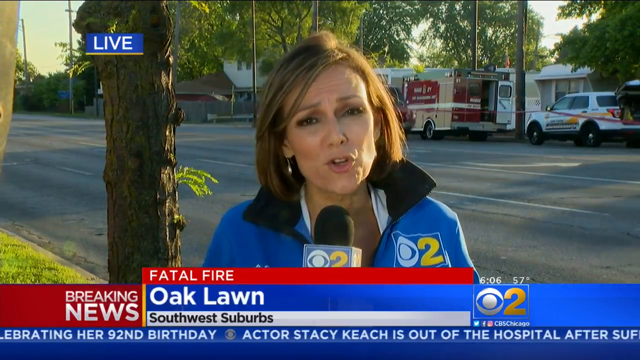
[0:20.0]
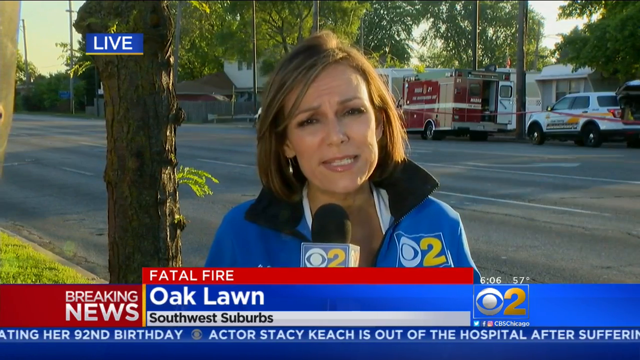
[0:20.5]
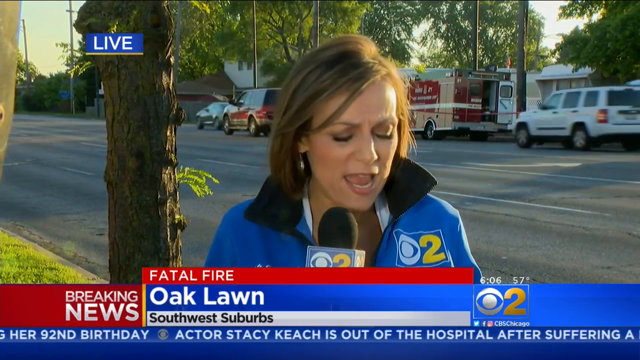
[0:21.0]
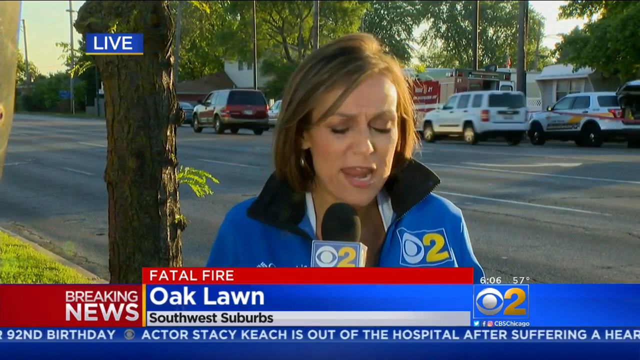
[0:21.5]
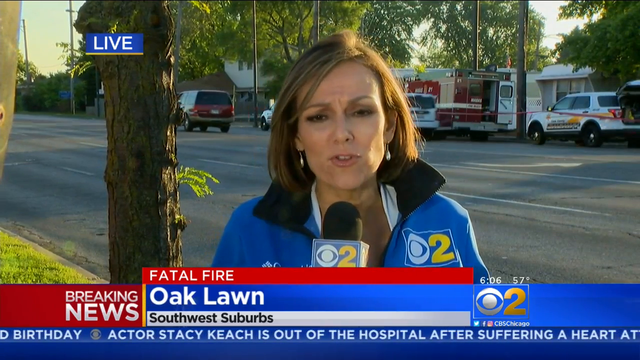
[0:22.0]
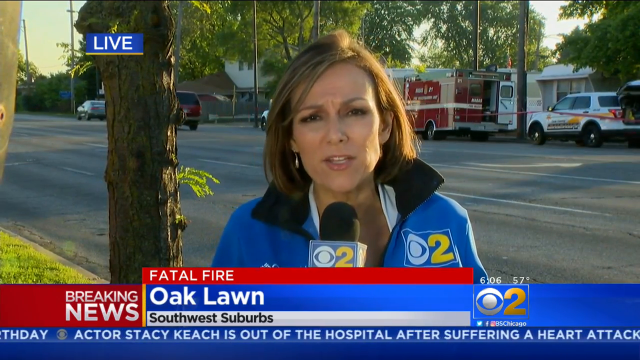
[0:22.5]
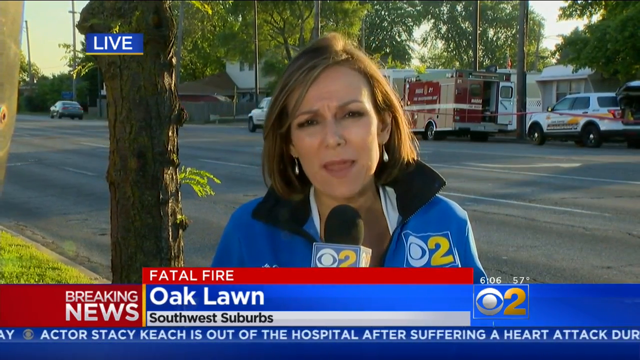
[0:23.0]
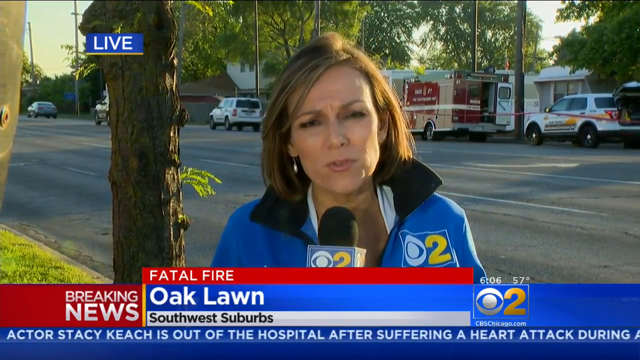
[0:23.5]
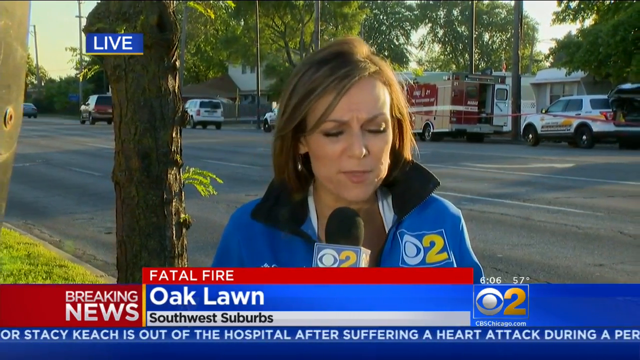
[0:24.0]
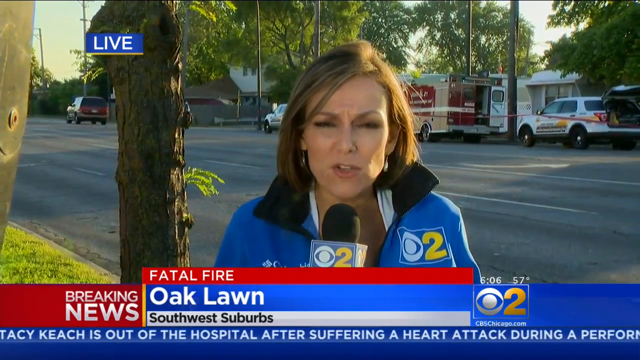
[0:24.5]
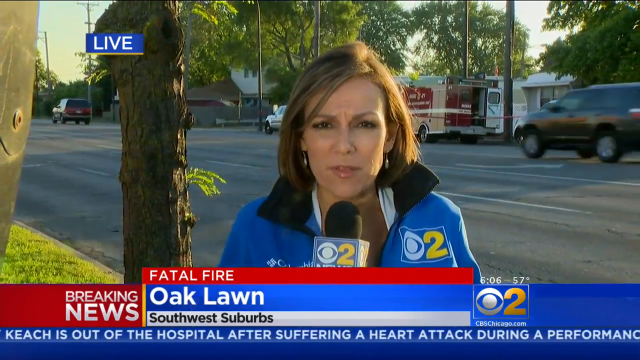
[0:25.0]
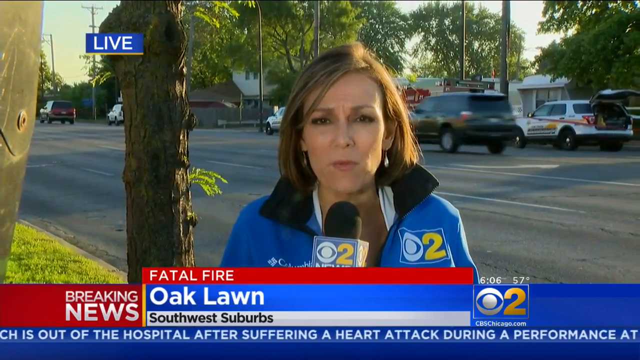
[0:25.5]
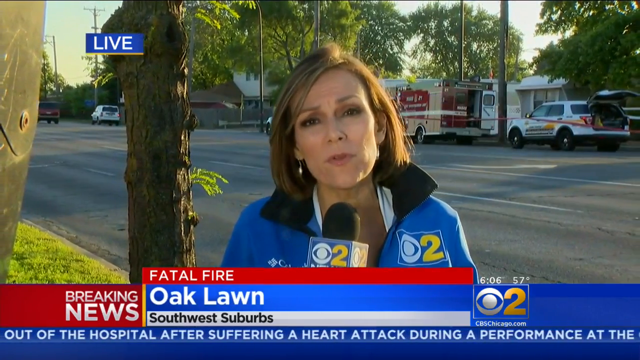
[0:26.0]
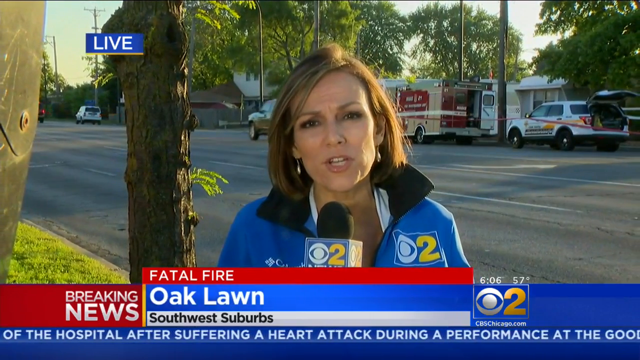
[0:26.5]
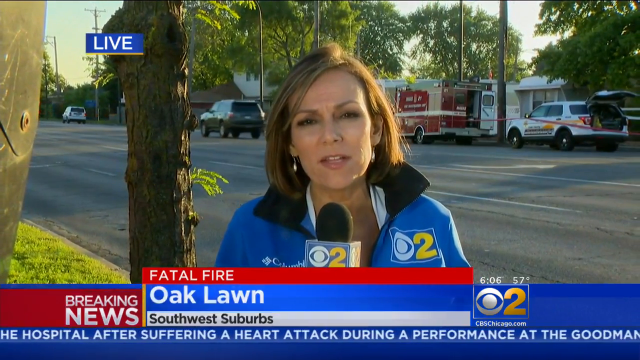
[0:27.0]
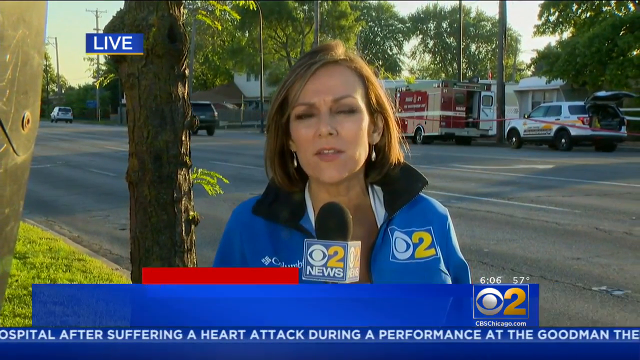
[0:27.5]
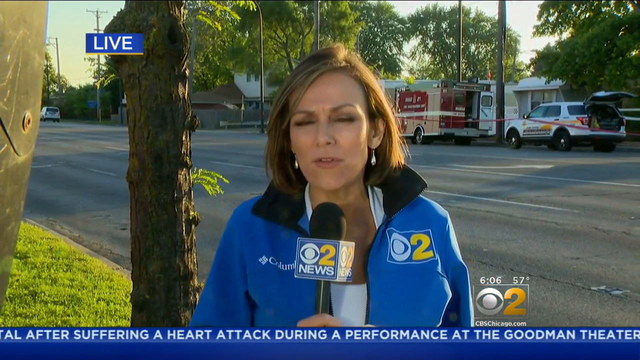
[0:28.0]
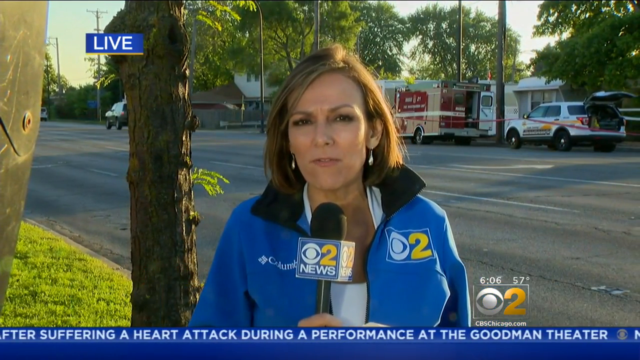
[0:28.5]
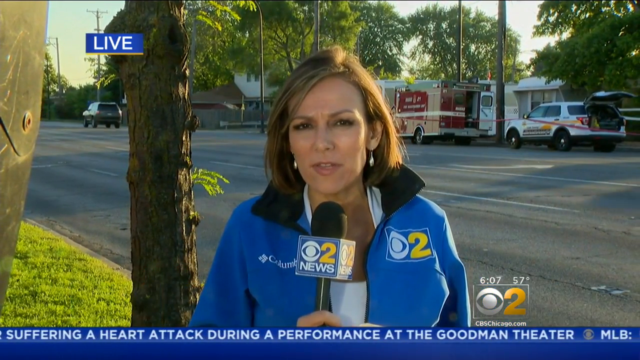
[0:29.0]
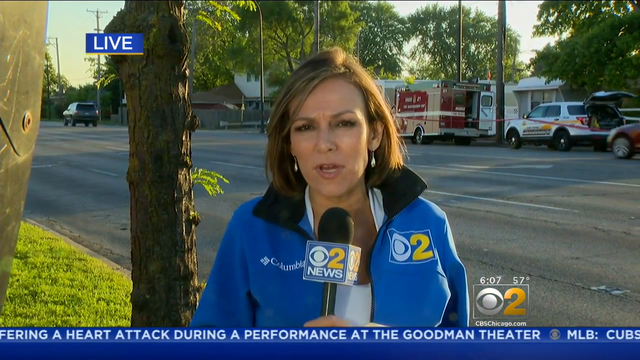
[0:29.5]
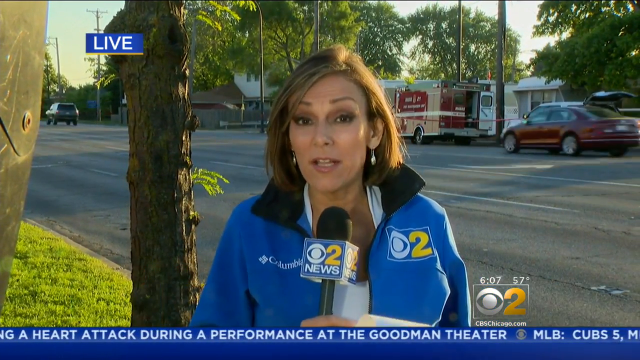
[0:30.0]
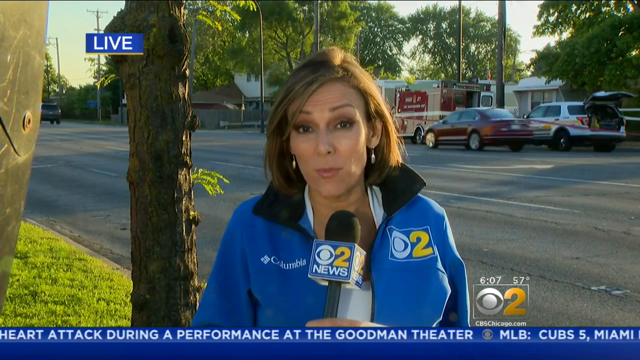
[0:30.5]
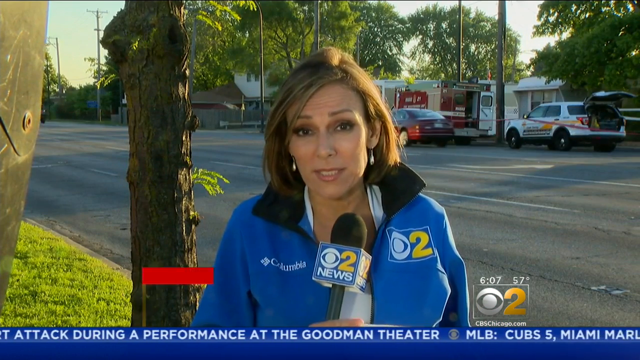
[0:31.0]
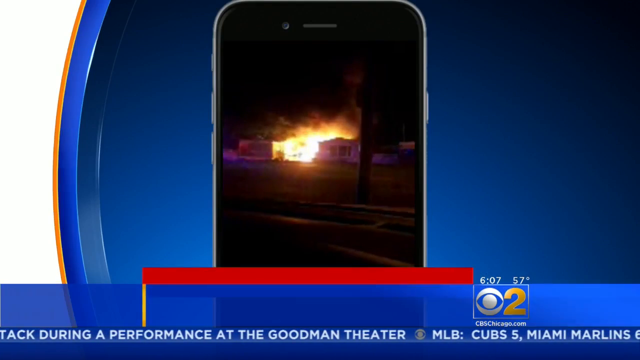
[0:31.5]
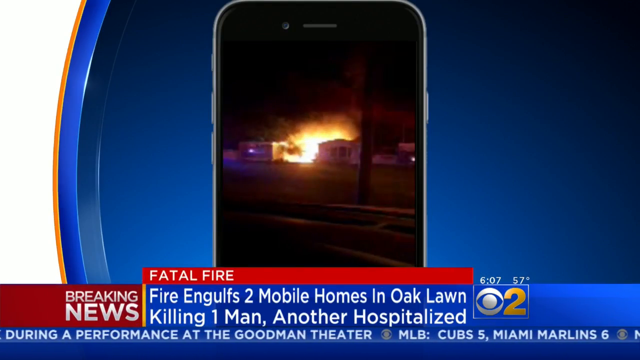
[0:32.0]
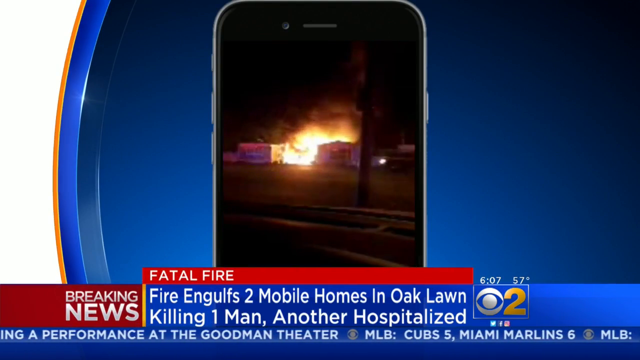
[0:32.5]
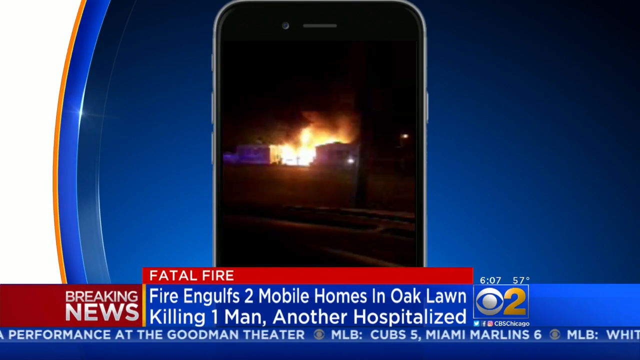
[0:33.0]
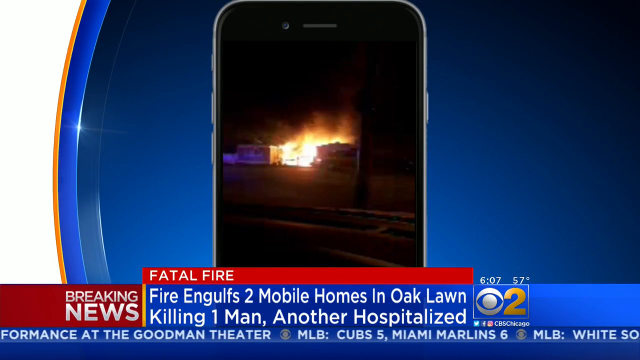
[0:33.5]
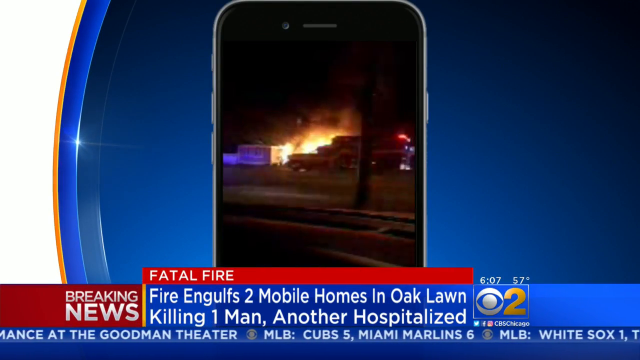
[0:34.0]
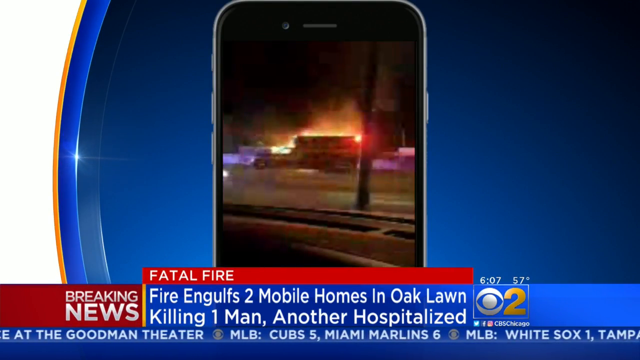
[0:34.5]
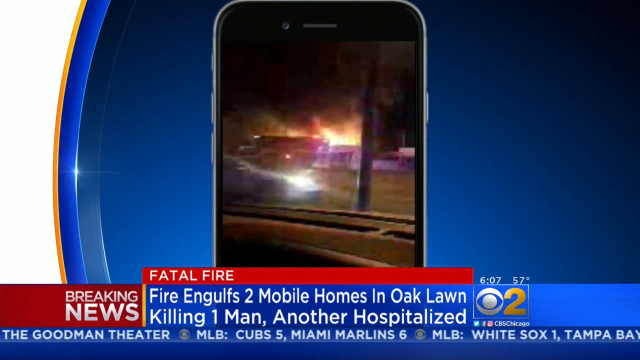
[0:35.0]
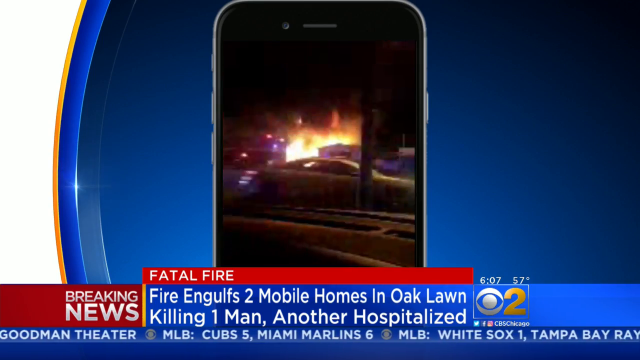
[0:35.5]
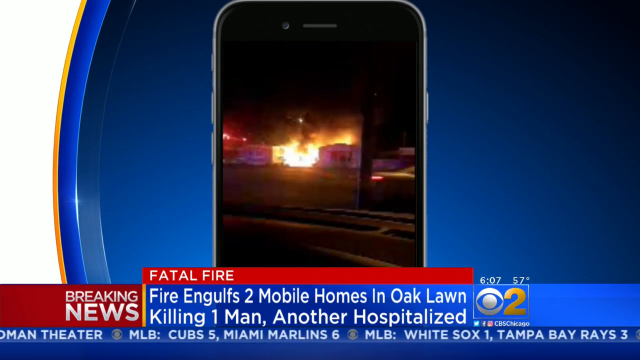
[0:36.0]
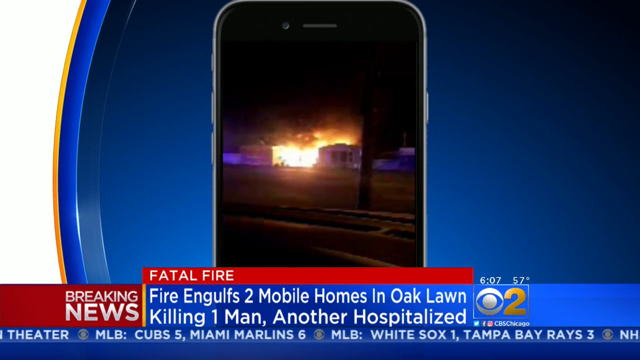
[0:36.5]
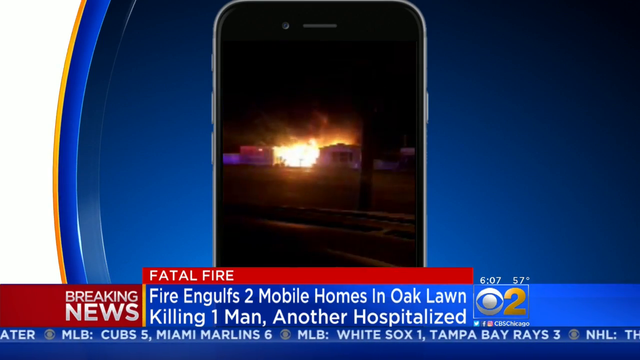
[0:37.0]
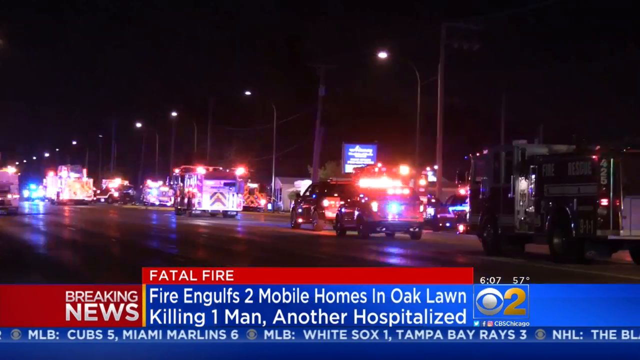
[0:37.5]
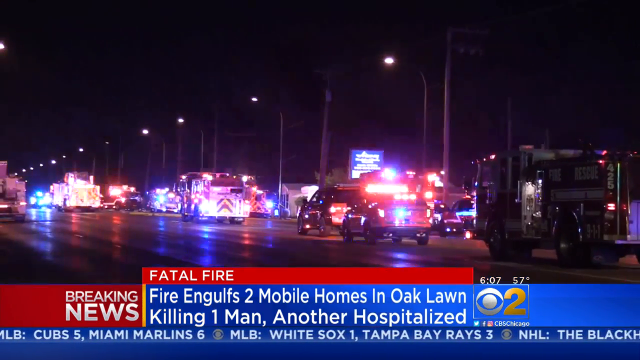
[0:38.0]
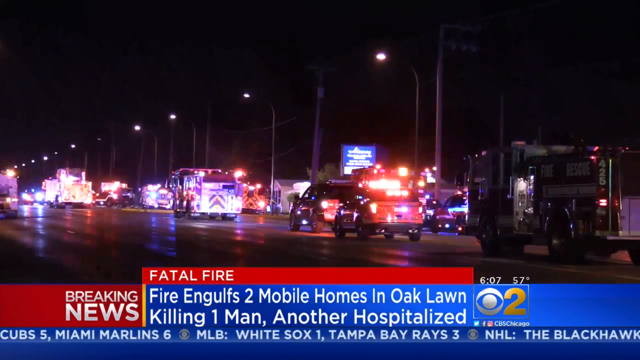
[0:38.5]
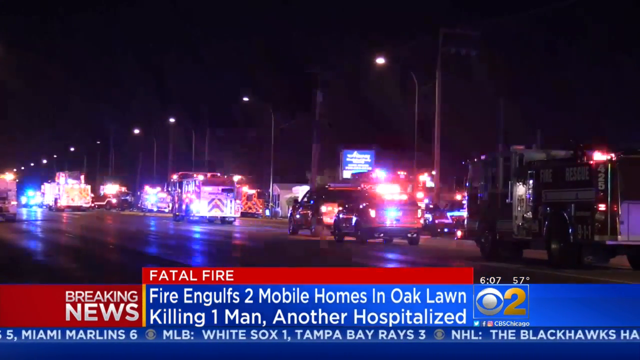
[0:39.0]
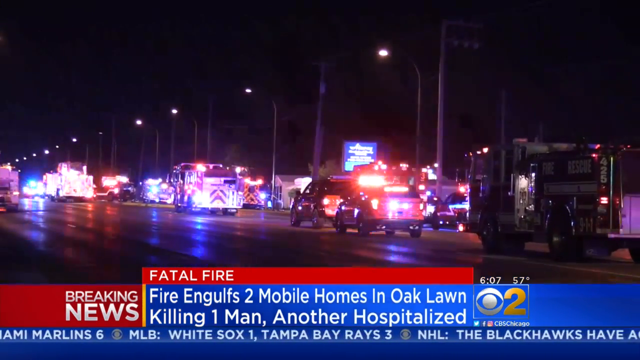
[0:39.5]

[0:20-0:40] A woman is positioned in the center of the frame, holding a black microphone with the logo of the television broadcaster on the front. She is on the edge of a busy road. She has short, dark hair and wears a pair of earrings. In the first seconds, the lower part of the screen shows colored rectangular graphics with white or black inscriptions inside. Then a graphic in the form of a cell phone appears in the center of the screen, showing a shot of a building in flames in the distance. Next comes a shot of a rather busy road with many vehicles, some of which are fire trucks. Along the road there are many high beams of light.